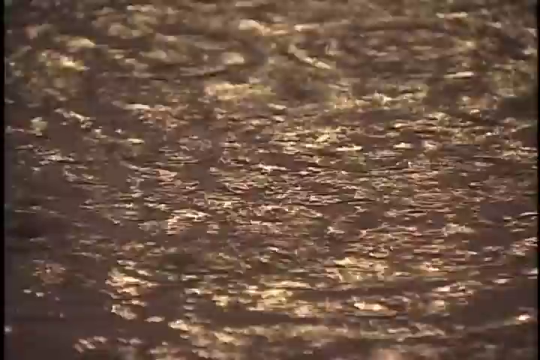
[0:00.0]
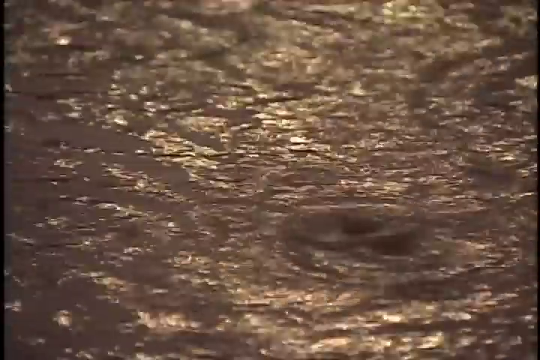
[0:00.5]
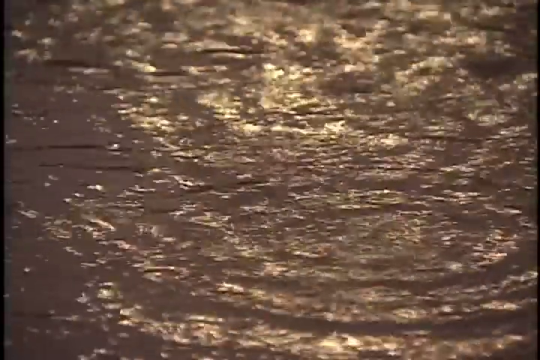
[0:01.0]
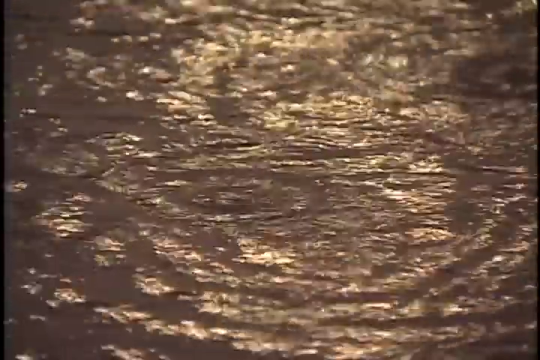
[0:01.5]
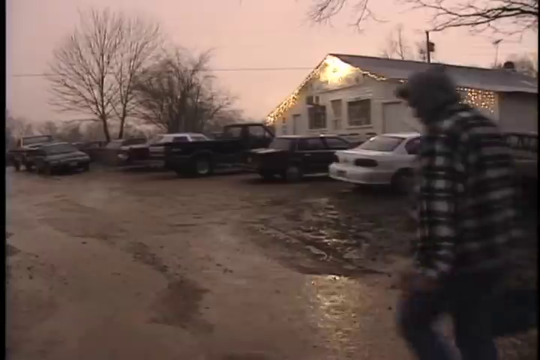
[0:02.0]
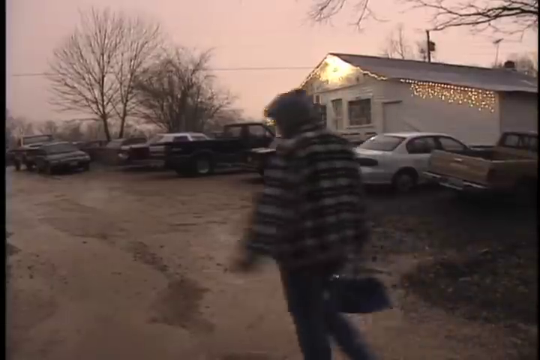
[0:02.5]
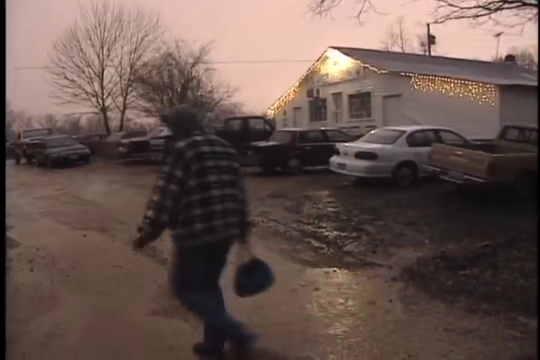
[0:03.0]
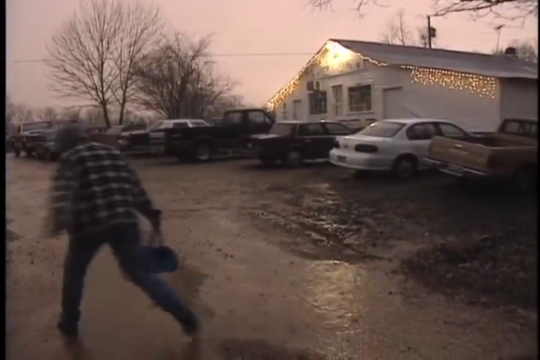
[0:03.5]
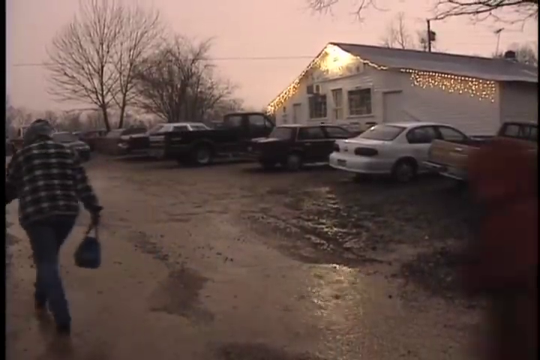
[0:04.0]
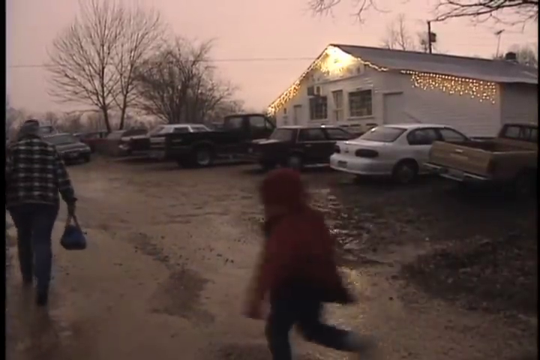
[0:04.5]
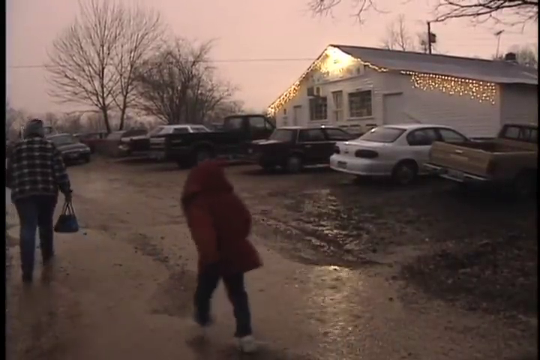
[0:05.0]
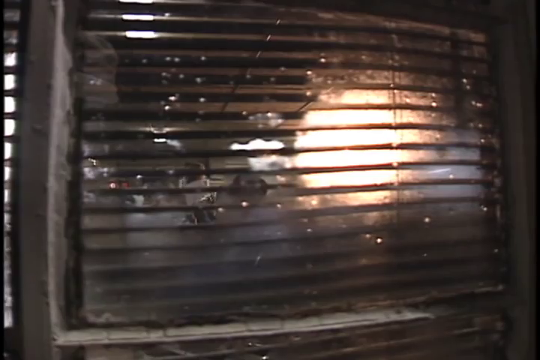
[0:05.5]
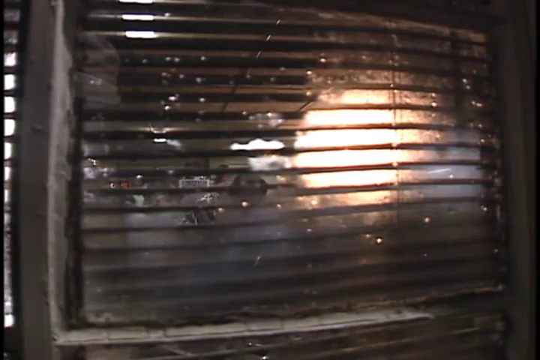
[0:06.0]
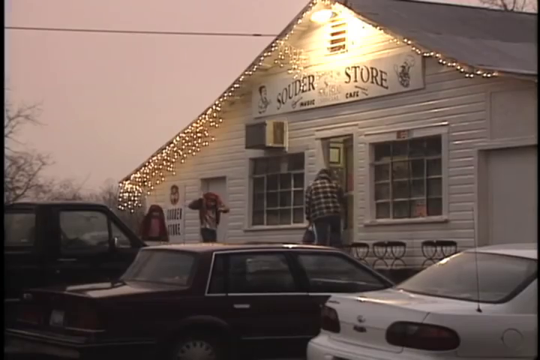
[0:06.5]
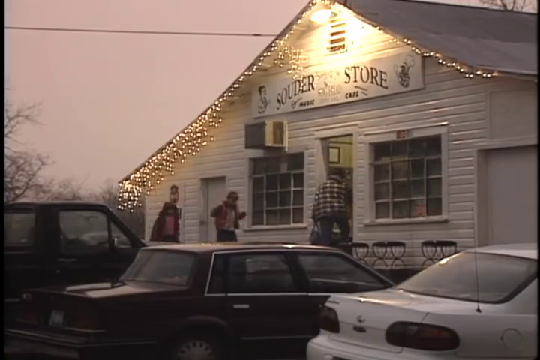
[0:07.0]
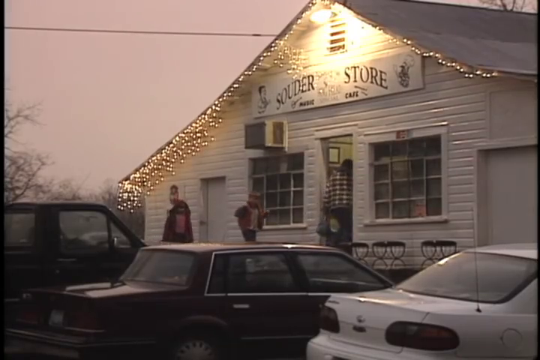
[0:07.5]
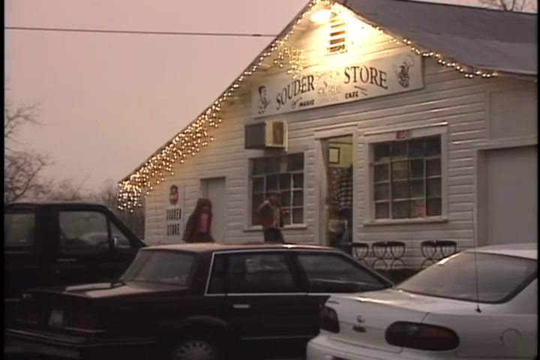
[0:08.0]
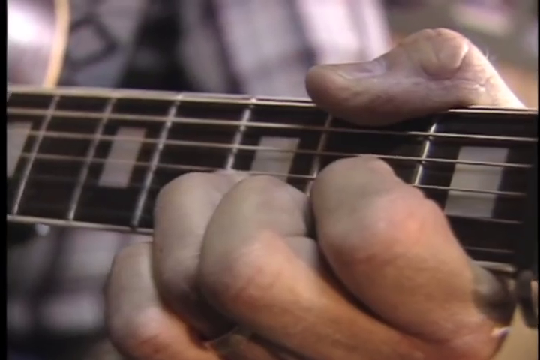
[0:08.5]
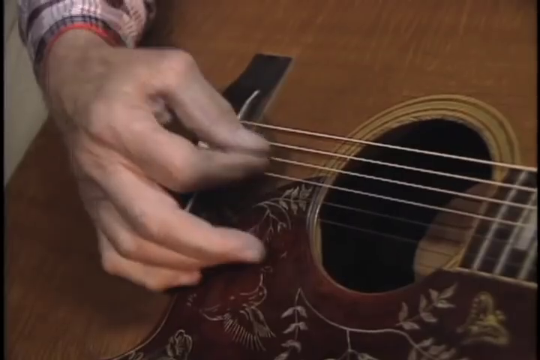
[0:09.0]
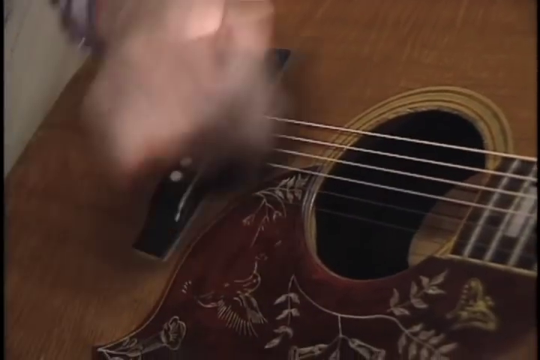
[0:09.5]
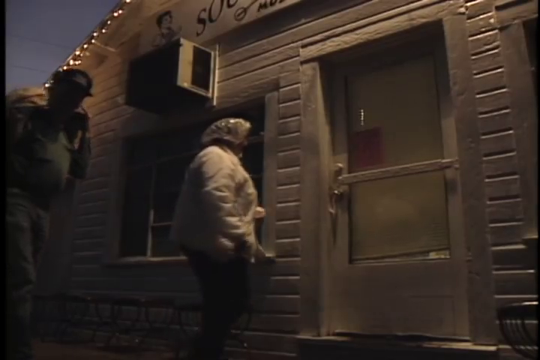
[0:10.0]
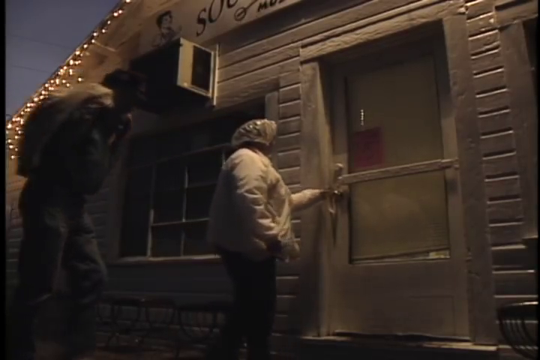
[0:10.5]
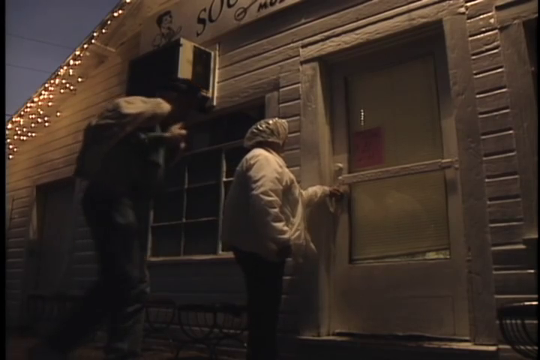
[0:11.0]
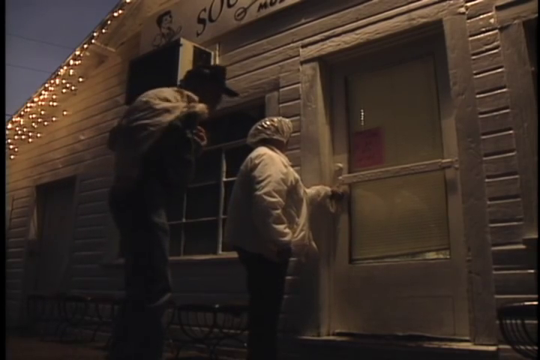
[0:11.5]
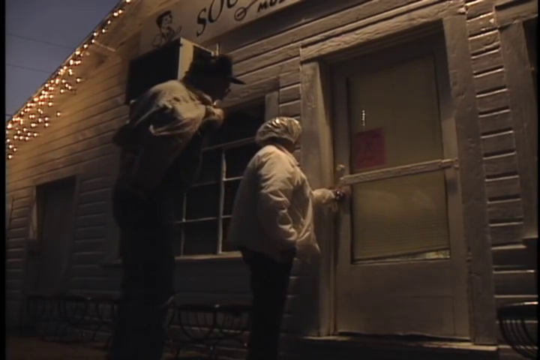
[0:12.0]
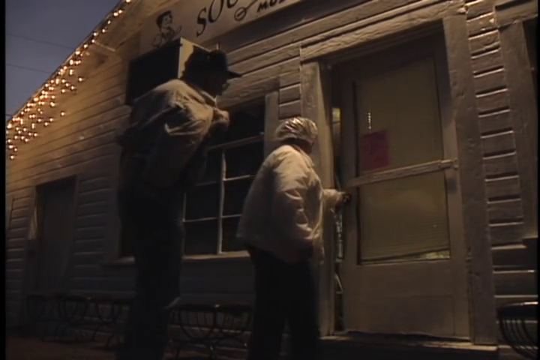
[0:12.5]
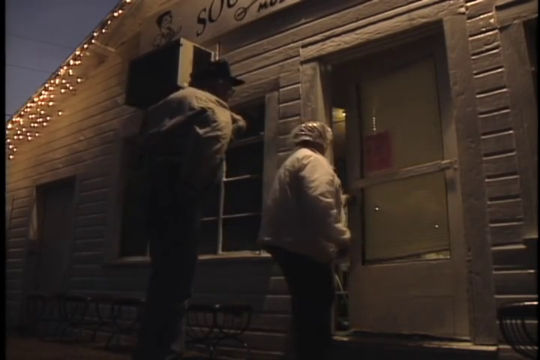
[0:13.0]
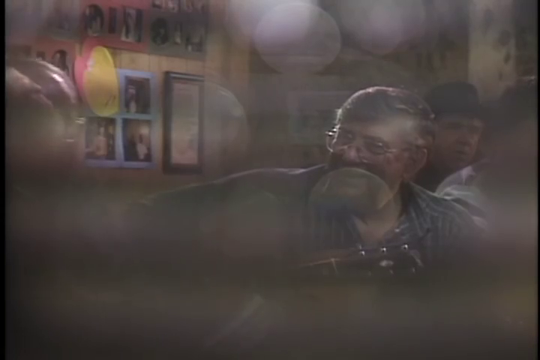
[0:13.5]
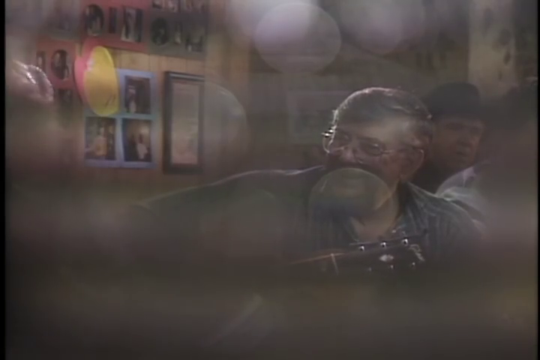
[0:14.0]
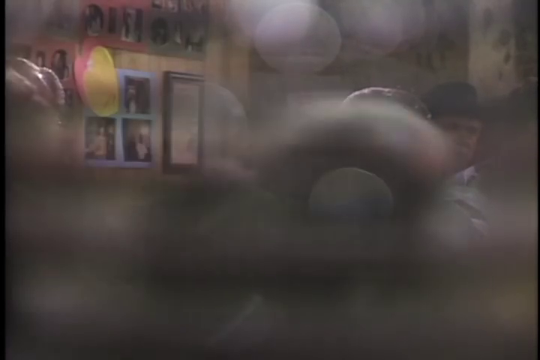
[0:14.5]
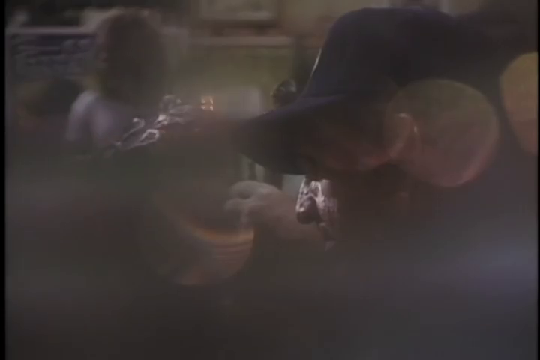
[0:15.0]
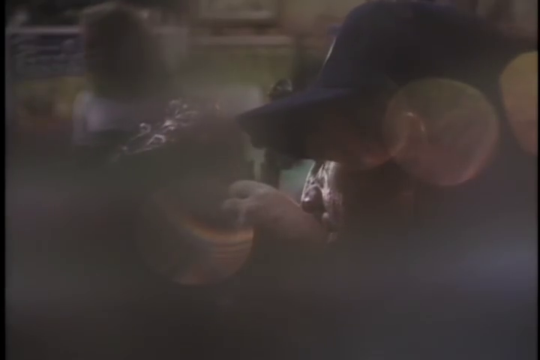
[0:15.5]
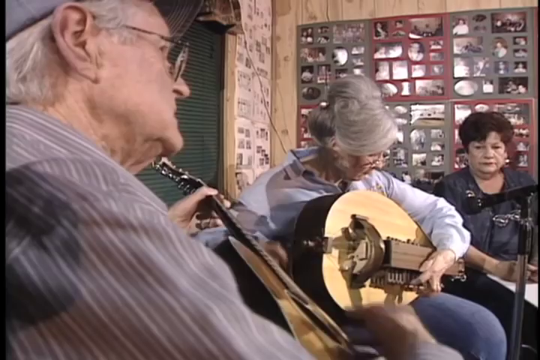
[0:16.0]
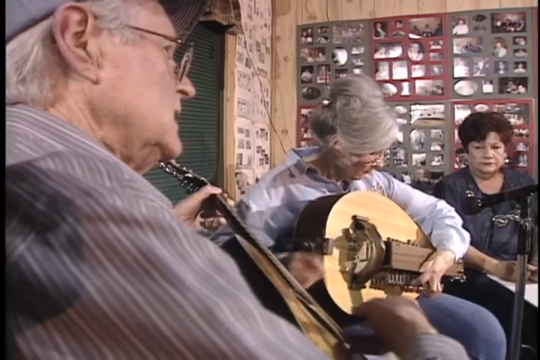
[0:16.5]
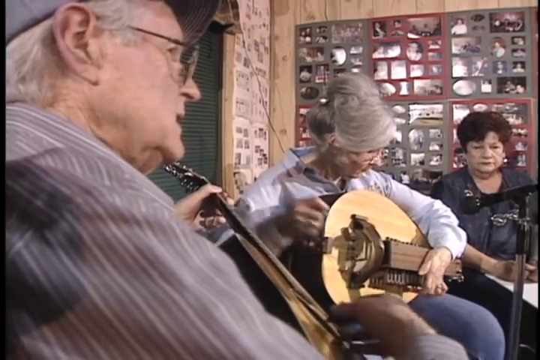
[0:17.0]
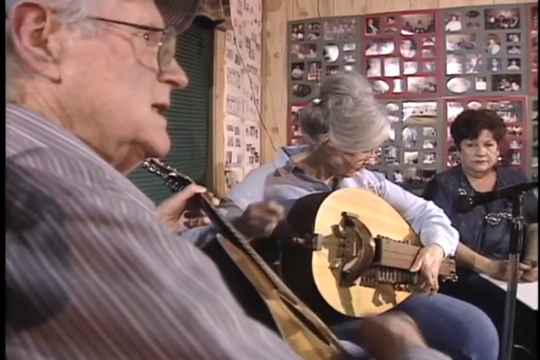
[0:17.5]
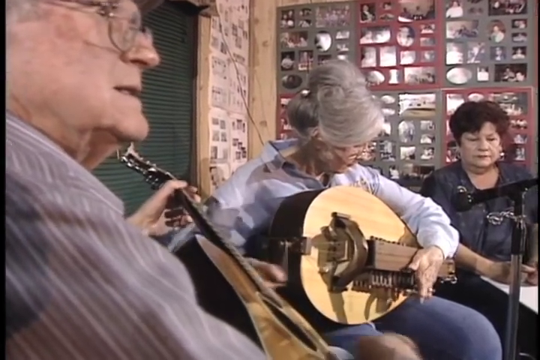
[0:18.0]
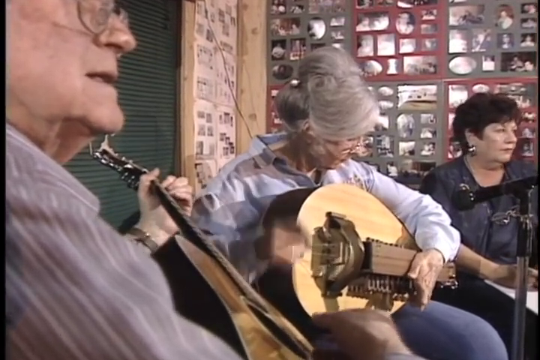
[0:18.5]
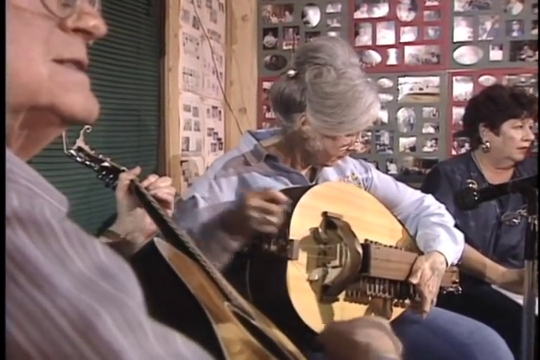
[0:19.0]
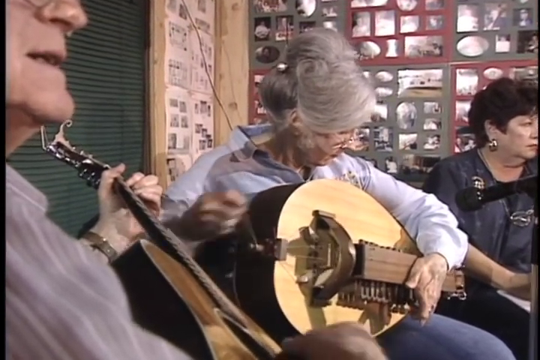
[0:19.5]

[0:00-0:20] Rain hits murky water, disturbing its surface. An adult, probably a woman, carries a handbag in her right hand while a child hurries along behind. The view then approaches something, with another child now in the foreground. Three cars are visible, a white one on the right and two darker-coloured ones. Covering most of the right of the image above the vehicles and halfway across the lower part of the left side is the sloping roof of what appears to be some sort of music cafe. The adult enters the door; the building has large square windows on either side, with some stools outside underneath them. She is followed by the two children, one of them a boy who appears to be uncovering his head. Next, an individual plucks the strings of a guitar. A couple arrives and goes through the door. Inside is a blurred crowd scene. Walls at the top right, stretching past midway, are adorned with what looks like photographs. Below them, from left to right, are an old man with glasses, his face only partly visible, playing a stringed instrument; a gray-haired woman in the center playing an odd-looking stringed instrument with a handle that she turns with her right hand; and next to her a middle-aged woman with dark hair, a blue top, and glasses hanging on a string around her neck.